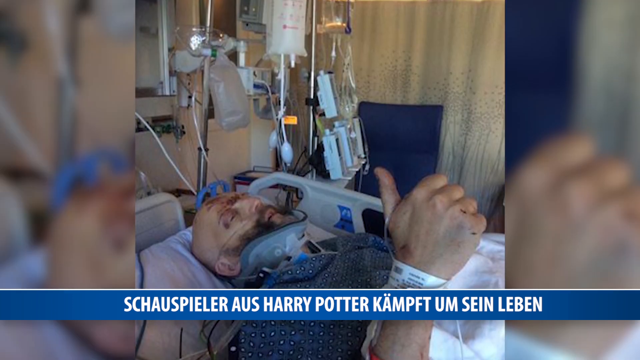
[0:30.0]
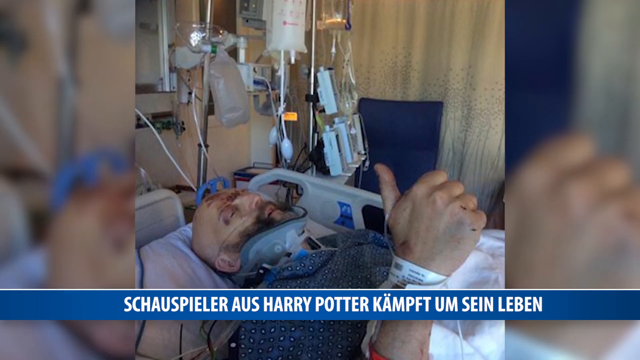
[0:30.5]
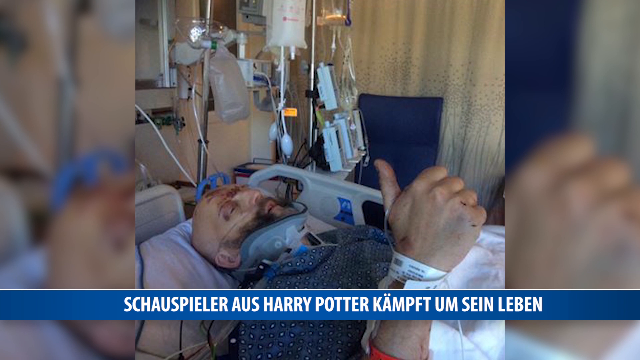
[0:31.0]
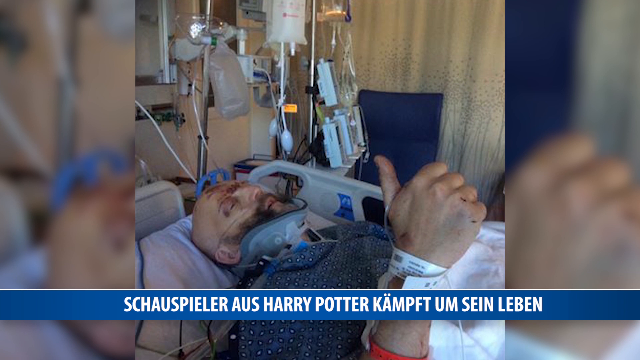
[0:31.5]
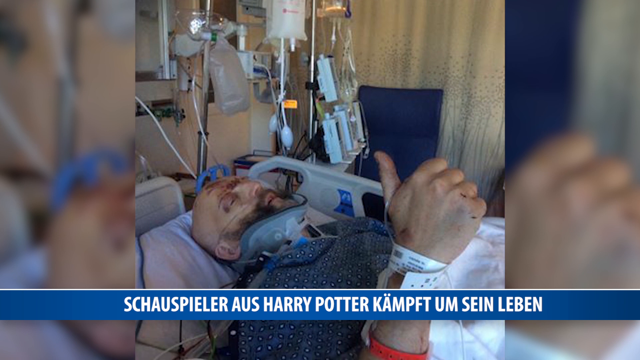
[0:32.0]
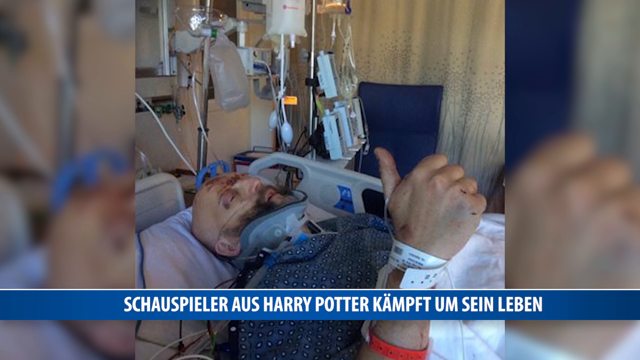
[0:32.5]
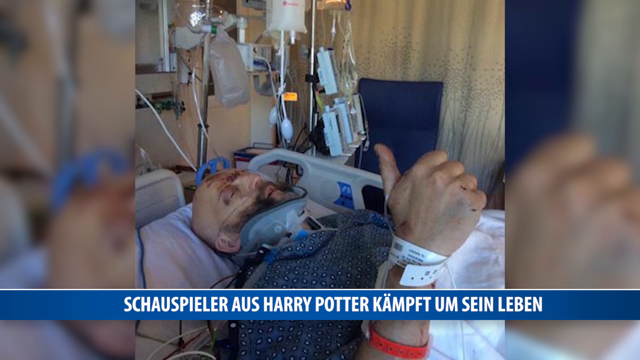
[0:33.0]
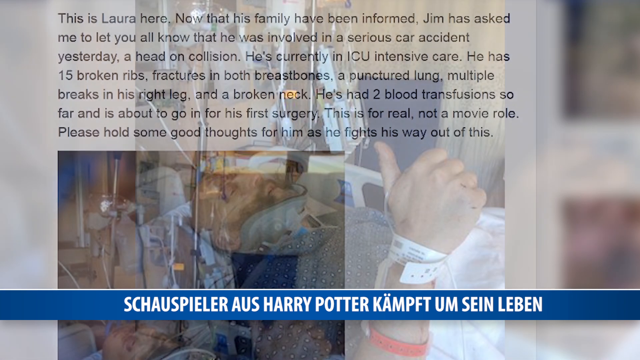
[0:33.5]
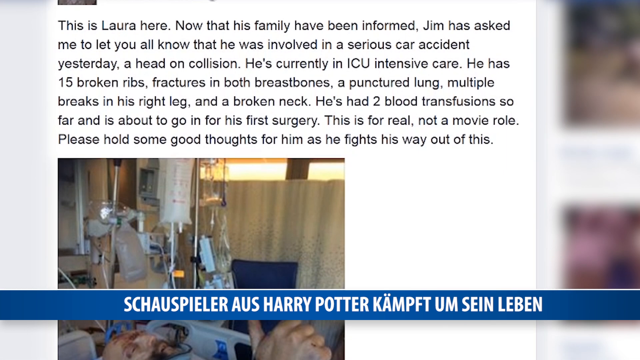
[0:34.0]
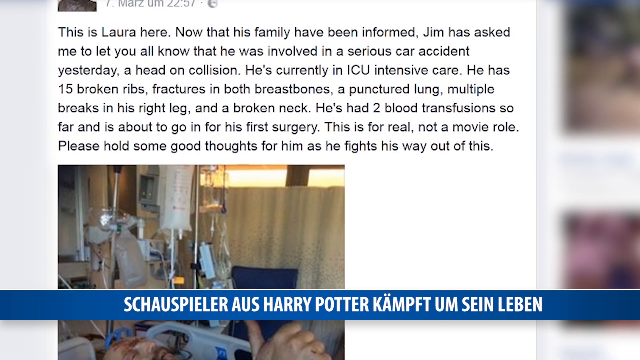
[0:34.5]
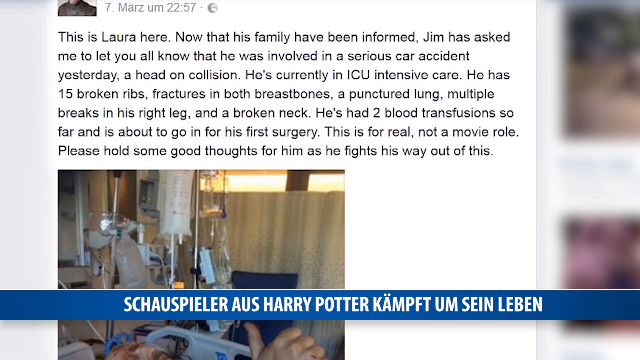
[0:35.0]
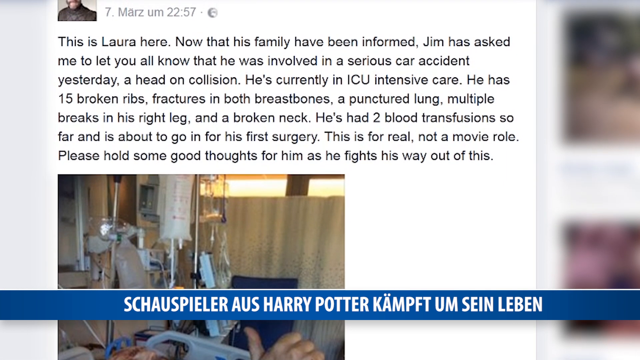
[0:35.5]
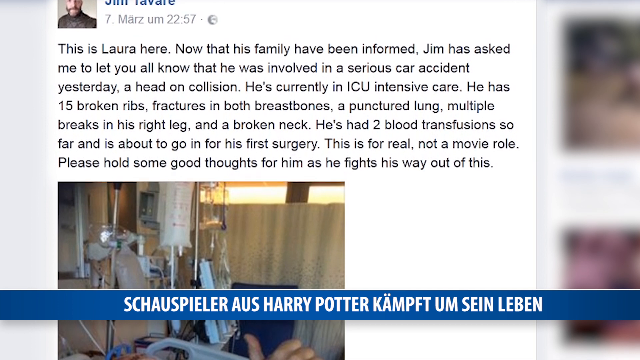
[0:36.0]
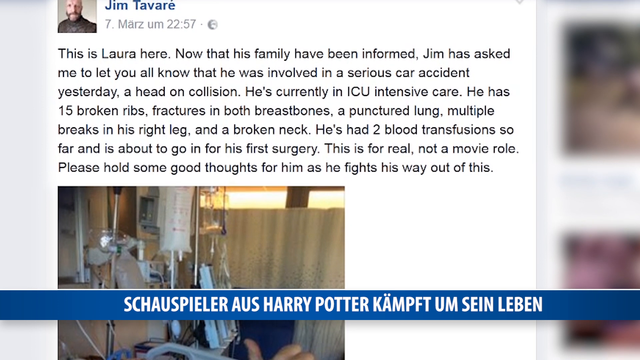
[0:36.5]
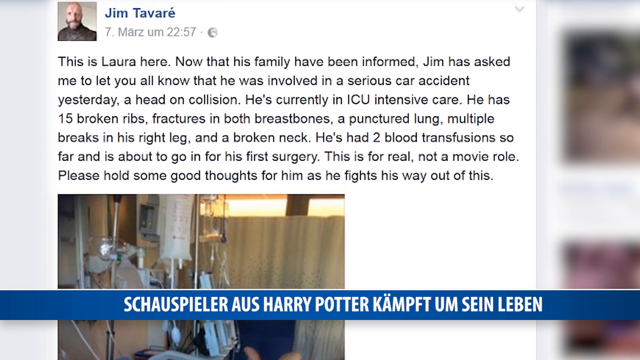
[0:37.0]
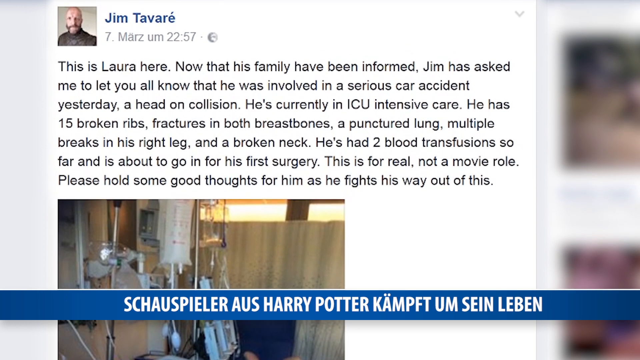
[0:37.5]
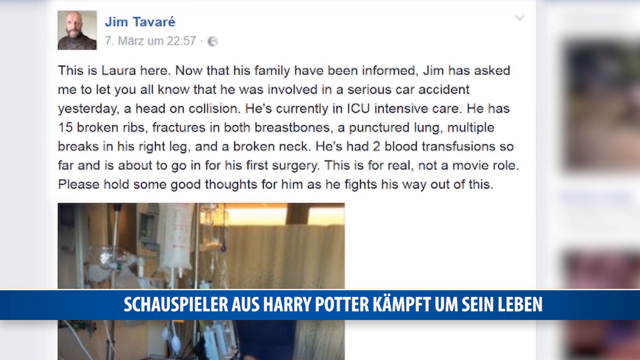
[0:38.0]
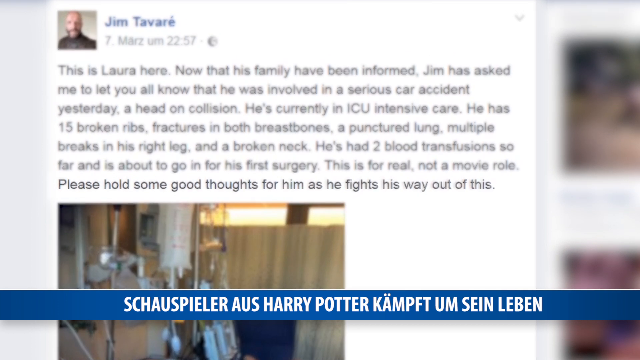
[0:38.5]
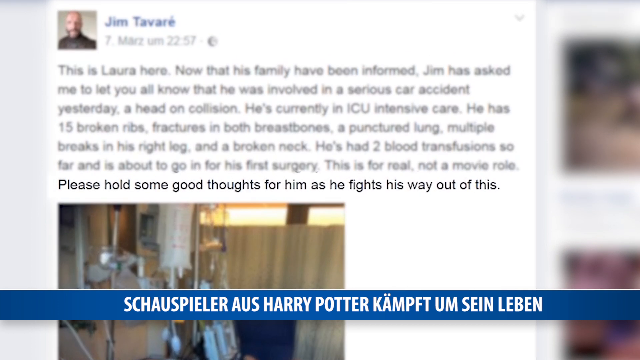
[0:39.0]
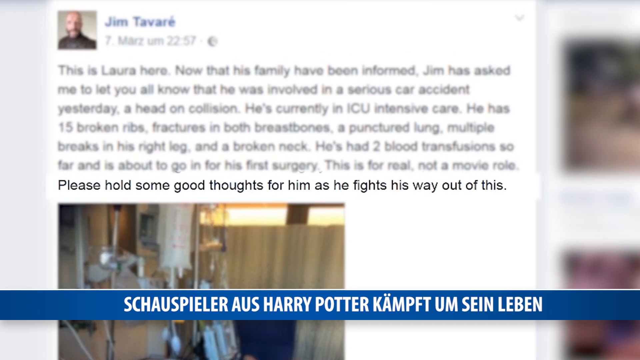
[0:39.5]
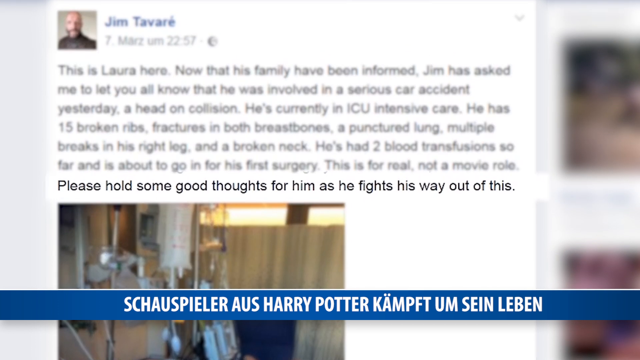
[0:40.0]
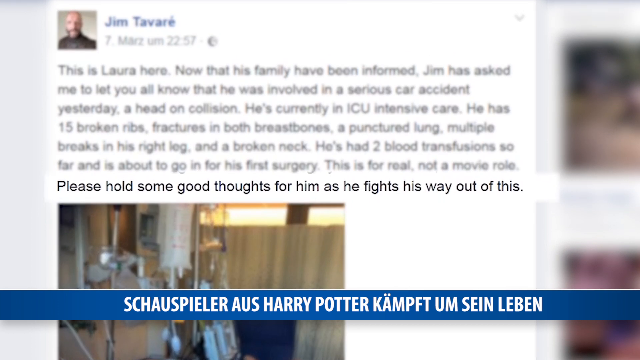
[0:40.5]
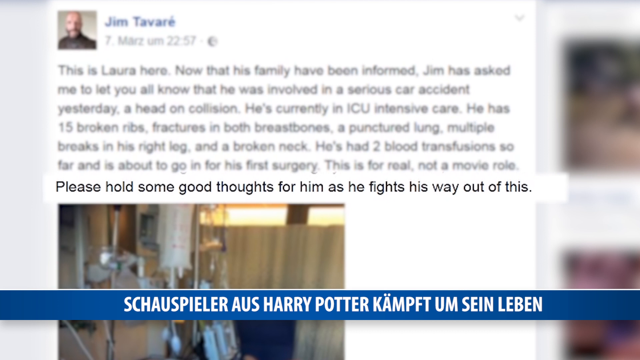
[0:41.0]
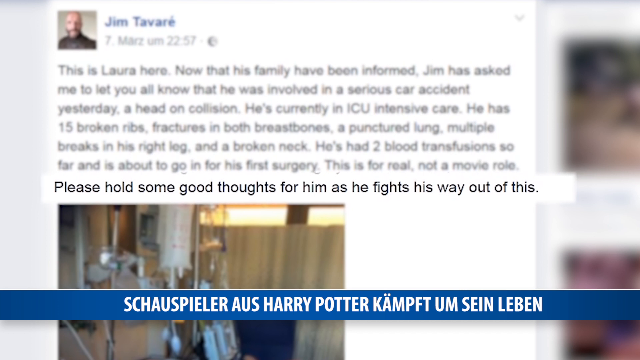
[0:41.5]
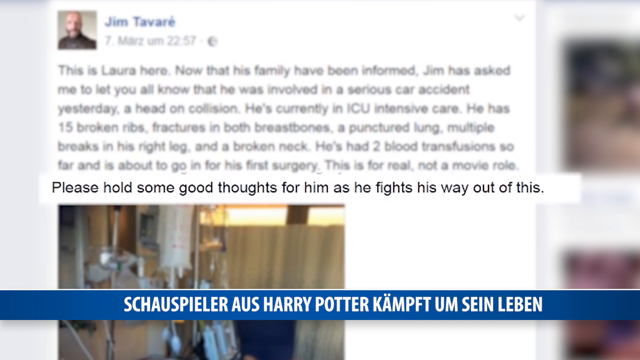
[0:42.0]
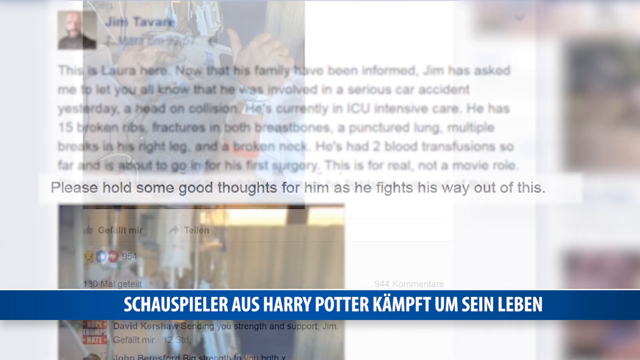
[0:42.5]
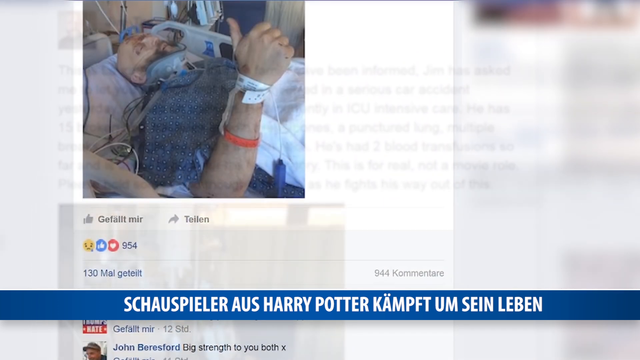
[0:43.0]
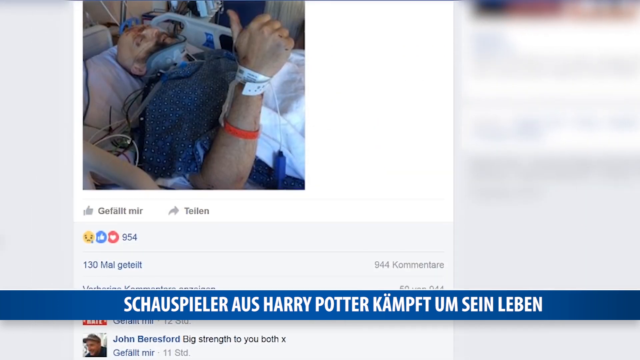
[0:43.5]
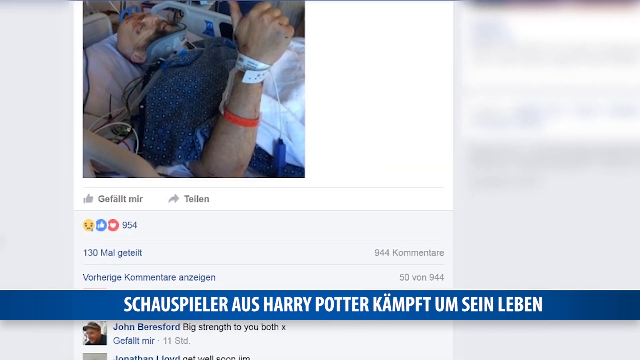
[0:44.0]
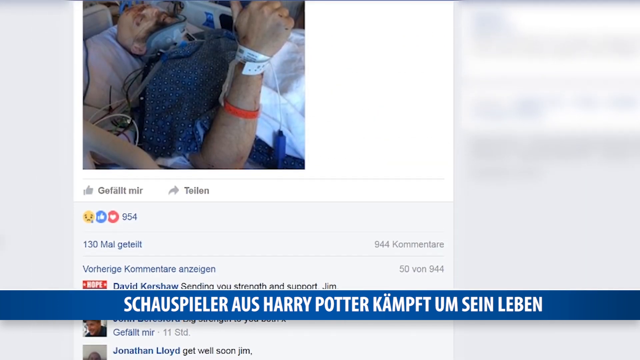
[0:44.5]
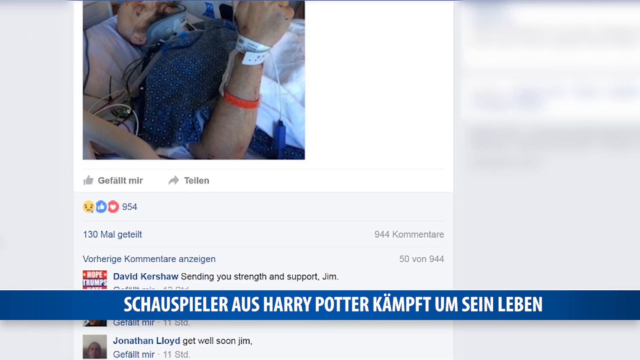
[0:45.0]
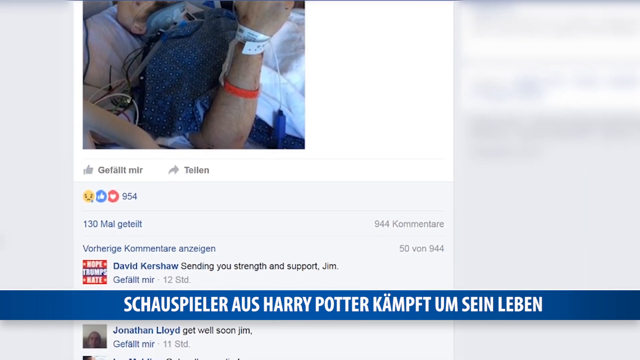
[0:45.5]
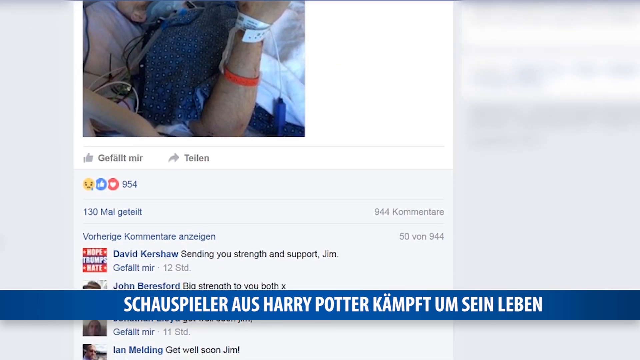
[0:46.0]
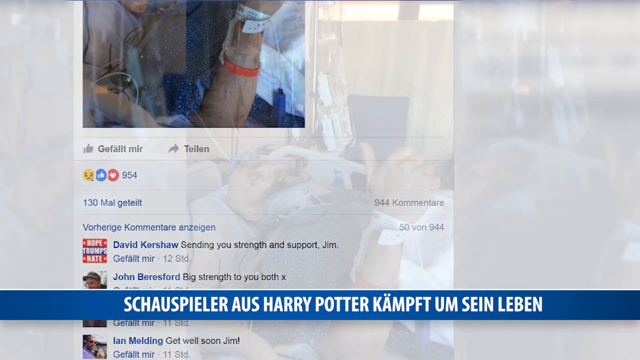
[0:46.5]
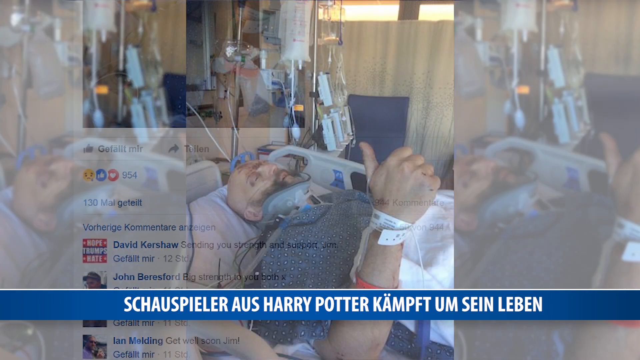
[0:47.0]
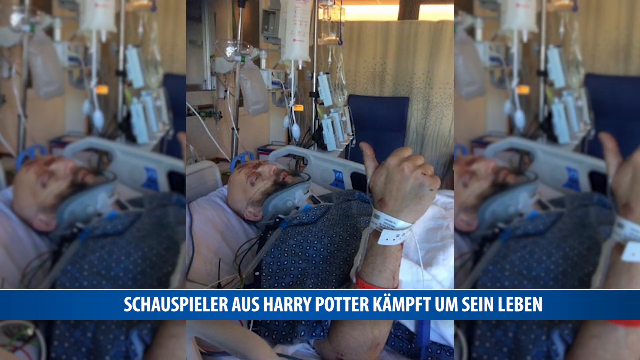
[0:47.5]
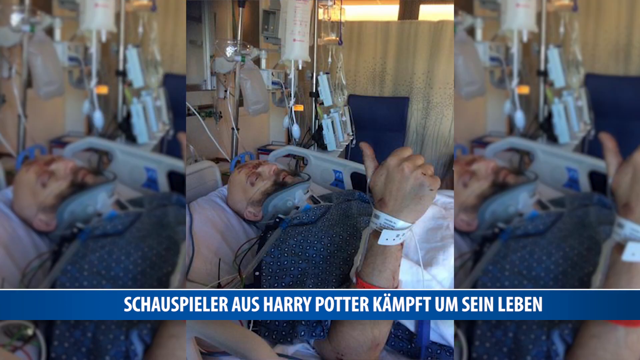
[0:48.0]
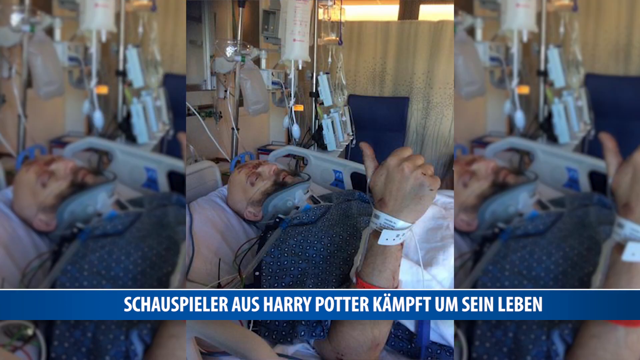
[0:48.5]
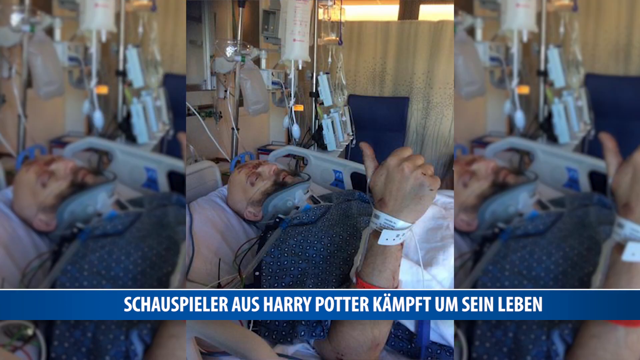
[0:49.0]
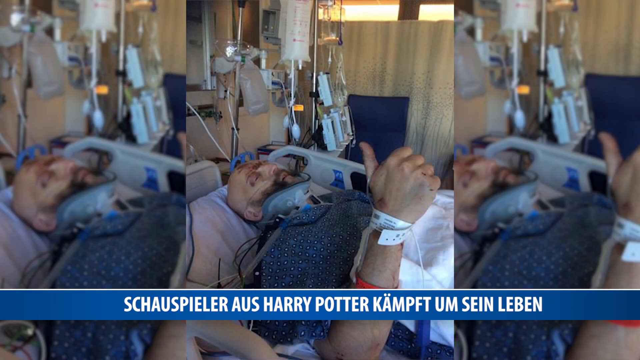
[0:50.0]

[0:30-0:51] The individual is shown after a kind of collision, maybe a car crash, looking kind of very hurt and not very good. He is seen in a hospital bed with his thumb up, followed by a large block of text reading "This is Laura here now that the family have been informed Jim has asked me to let you all know that he was involved in a serious car accident yesterday a head-on collision and he's currently in the icu intensive care", which goes on to list 15 broken ribs, fractured breastbones, a punctured lung, multiple breaks in his right leg and a broken neck. The video ends after this sort of informational update about his crash.